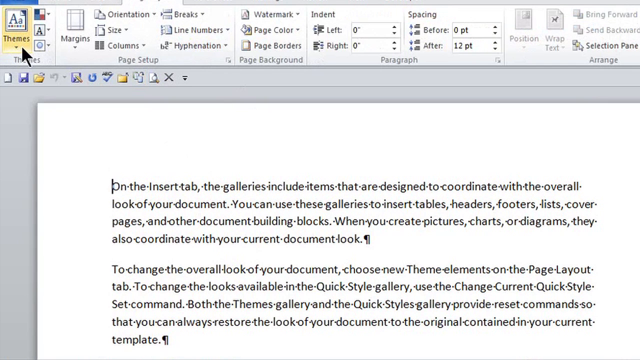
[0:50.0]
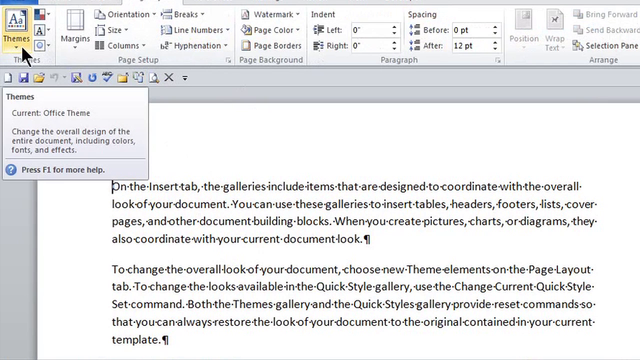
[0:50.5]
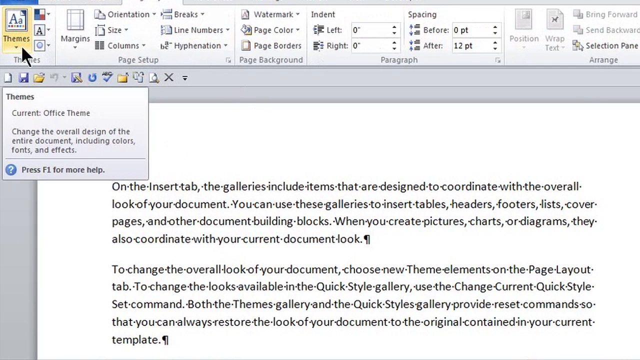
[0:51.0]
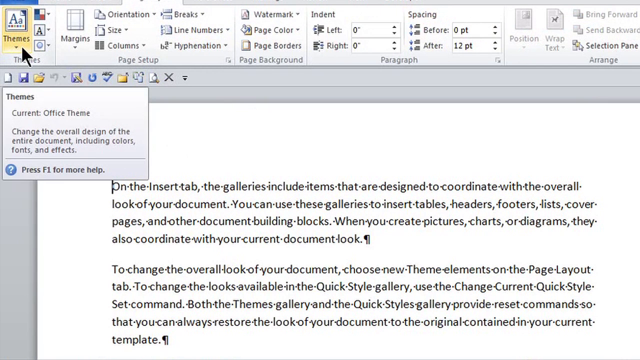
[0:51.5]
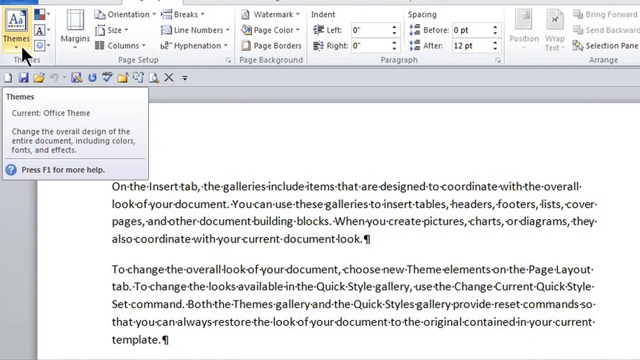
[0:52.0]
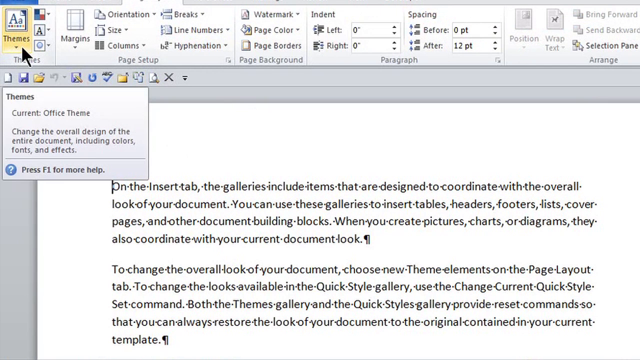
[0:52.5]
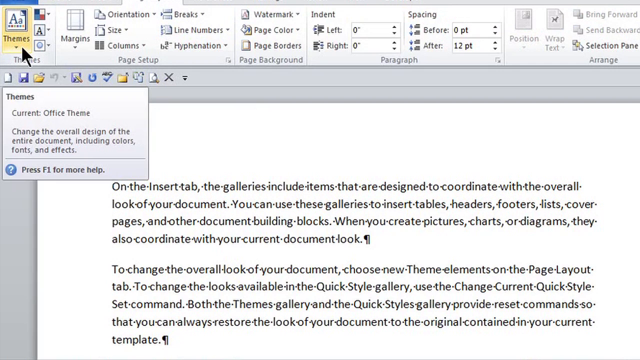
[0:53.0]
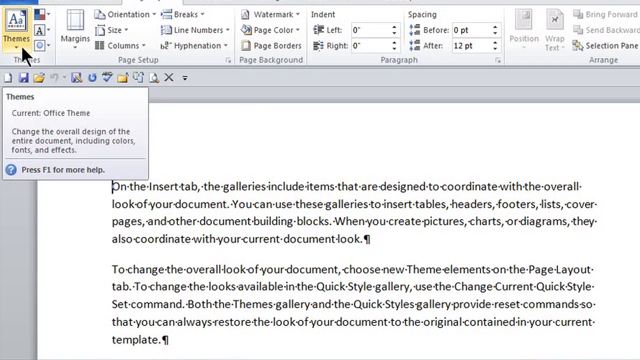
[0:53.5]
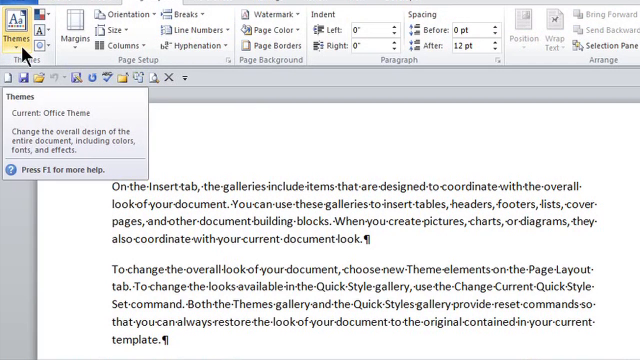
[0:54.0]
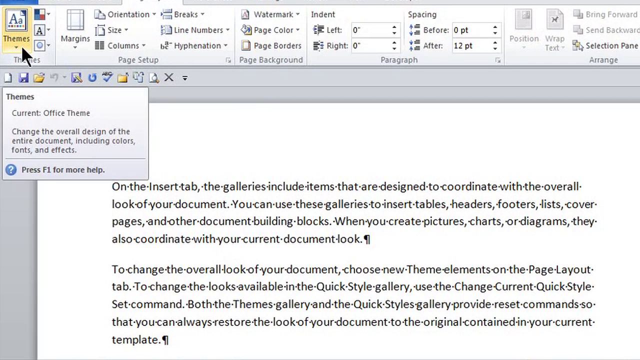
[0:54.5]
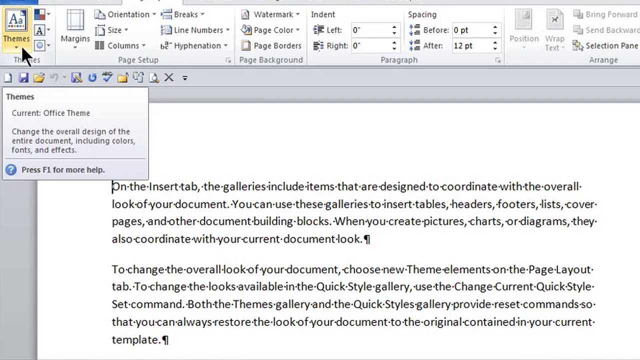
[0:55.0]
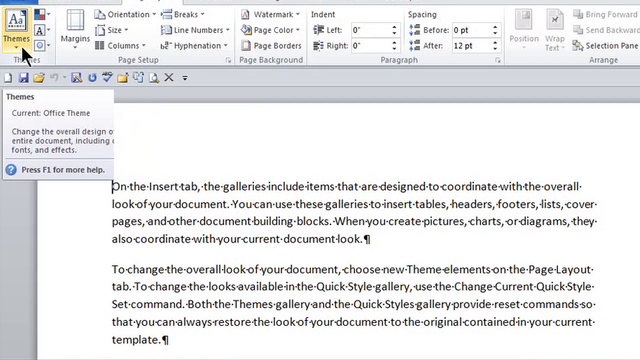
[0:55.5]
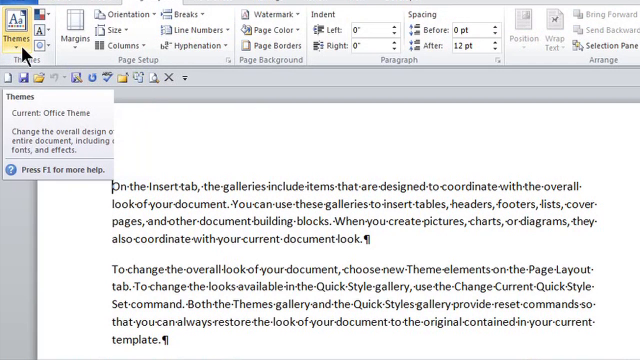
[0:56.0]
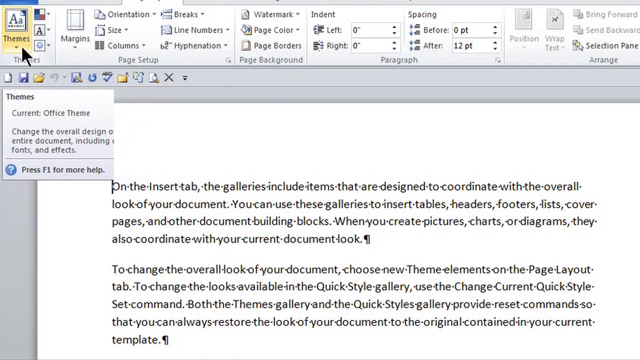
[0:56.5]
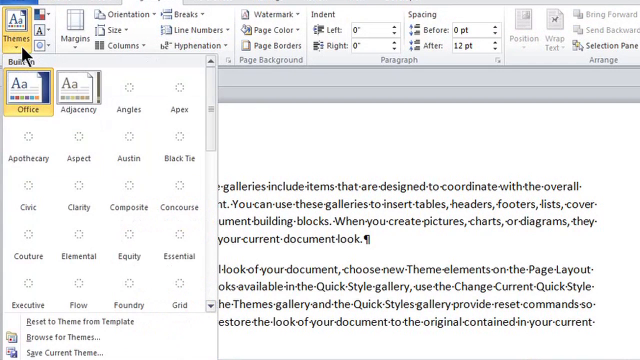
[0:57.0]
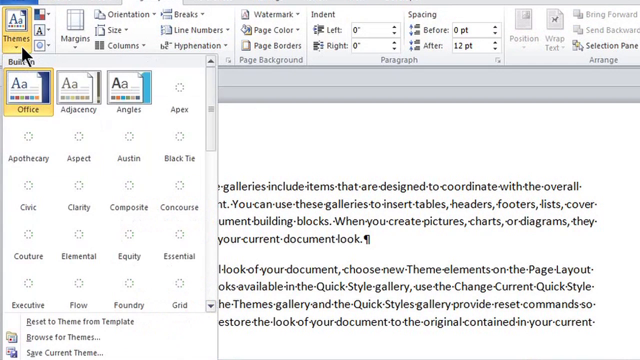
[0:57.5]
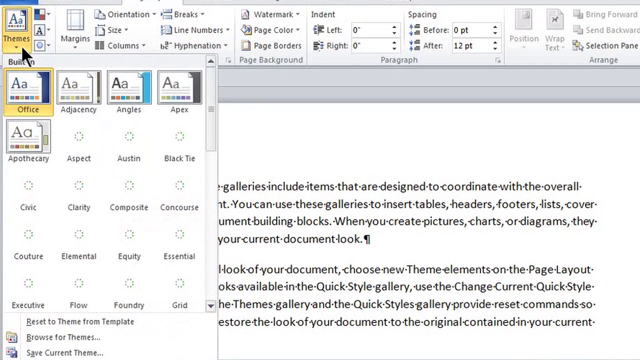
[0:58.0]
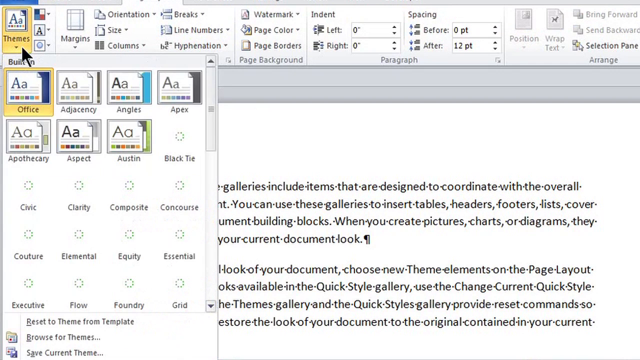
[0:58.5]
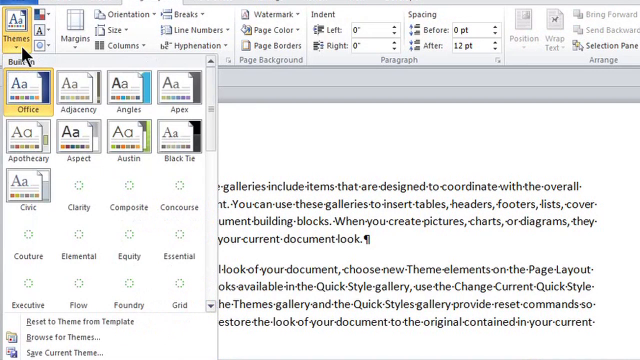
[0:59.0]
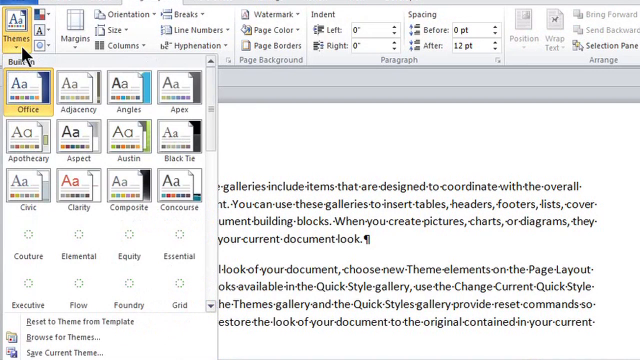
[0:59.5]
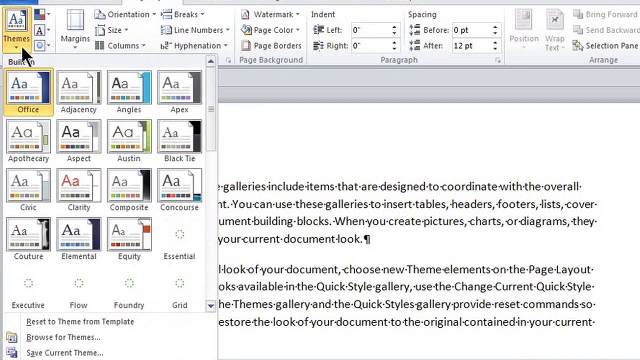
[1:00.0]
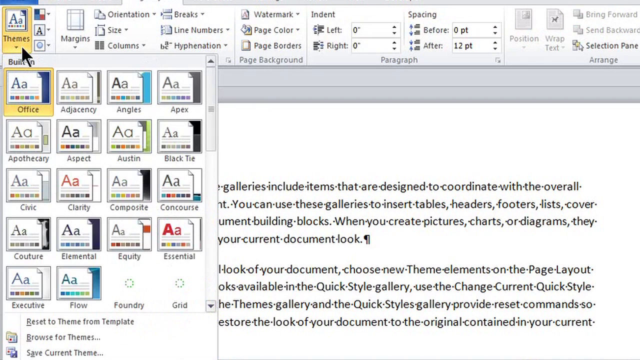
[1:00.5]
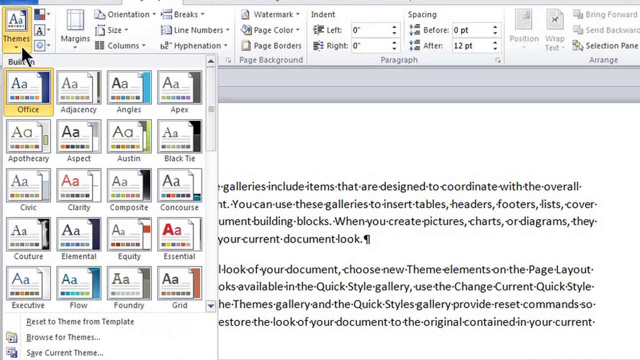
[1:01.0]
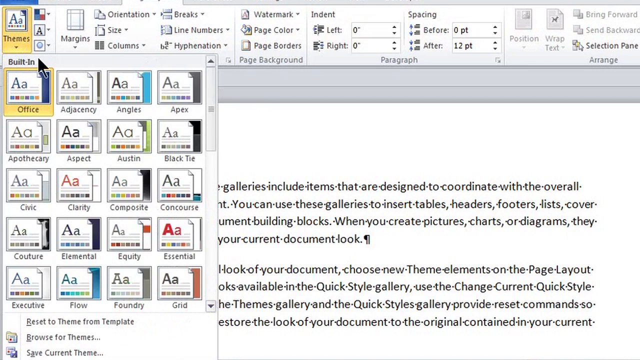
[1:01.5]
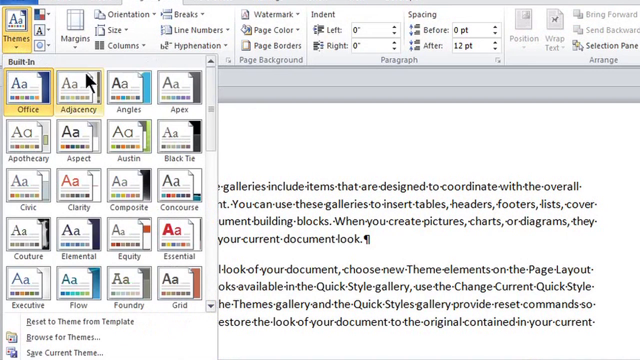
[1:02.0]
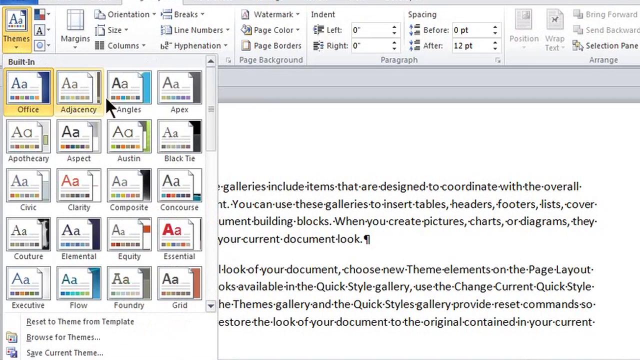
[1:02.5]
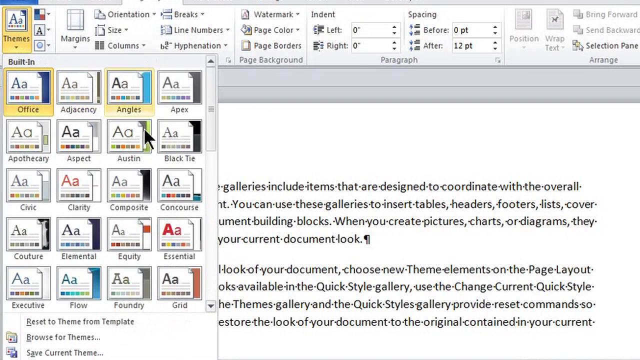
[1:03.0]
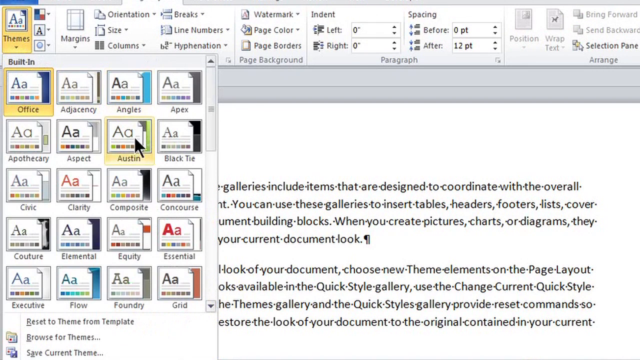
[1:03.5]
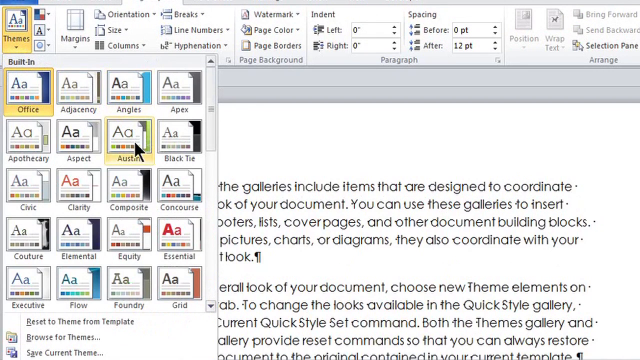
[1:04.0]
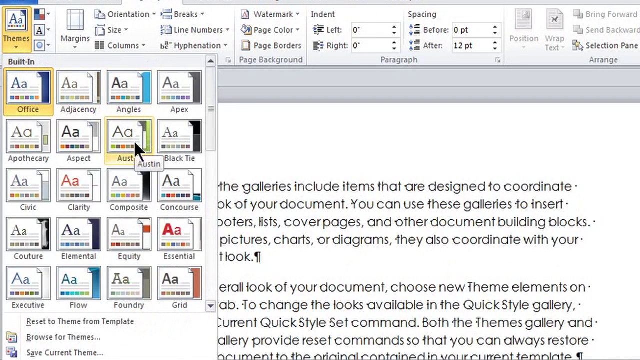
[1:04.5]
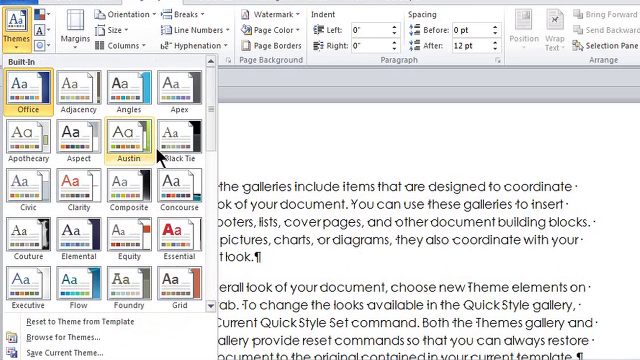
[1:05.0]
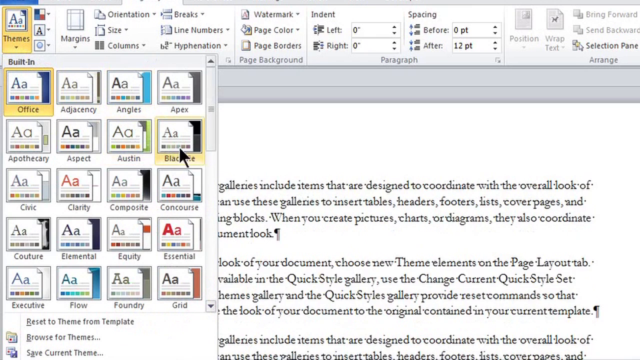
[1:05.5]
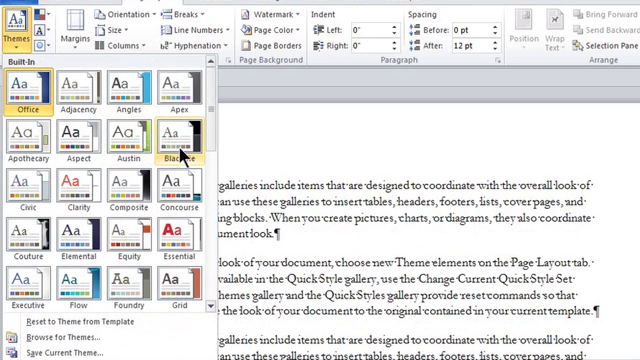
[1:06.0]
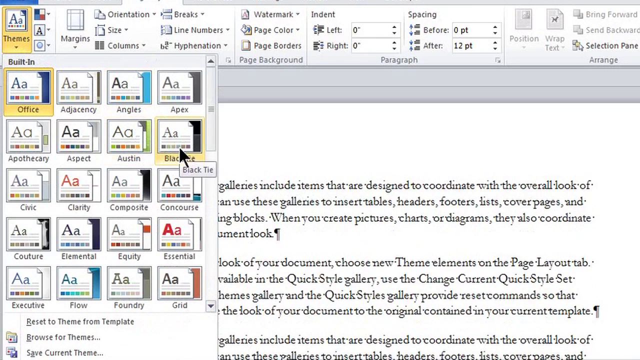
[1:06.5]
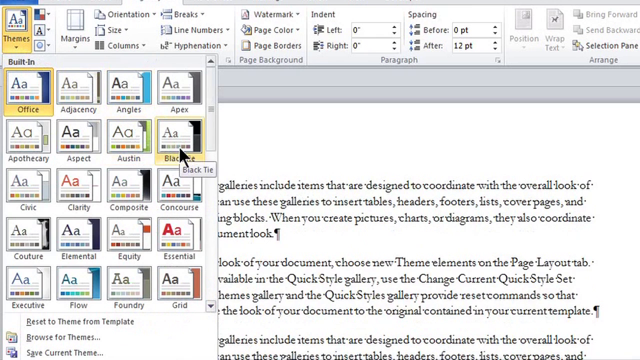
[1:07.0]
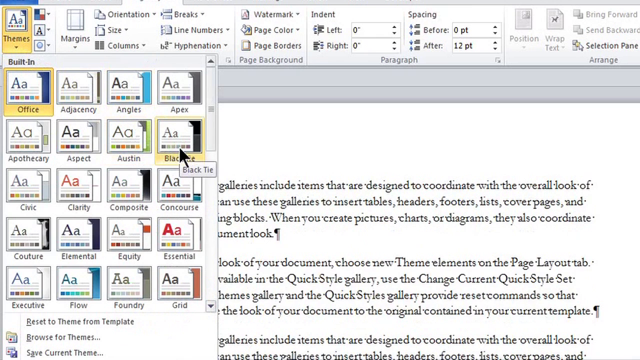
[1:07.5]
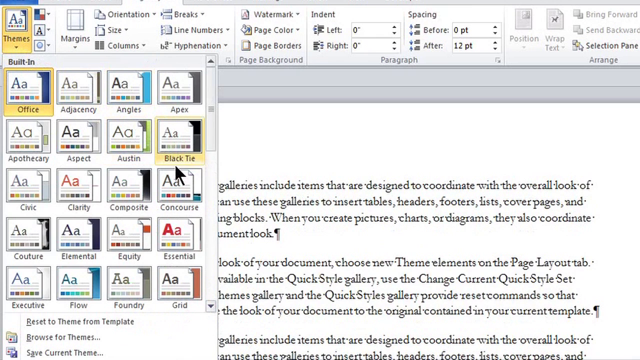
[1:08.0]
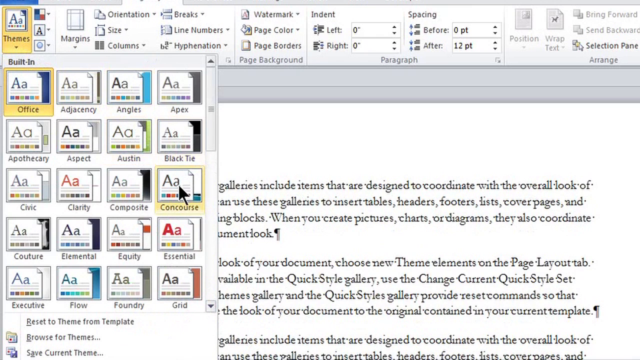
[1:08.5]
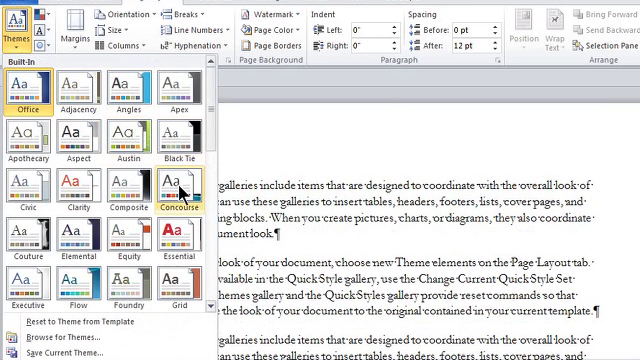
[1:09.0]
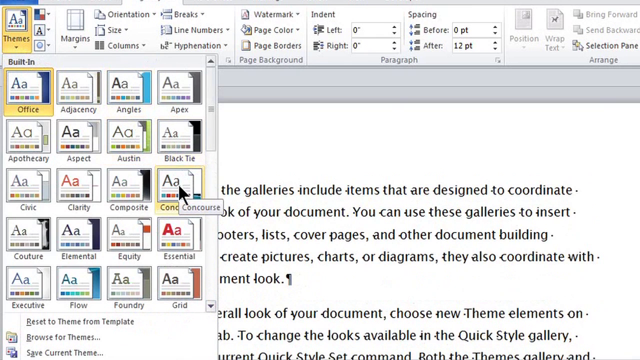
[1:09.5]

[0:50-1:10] The page reads: "to change the overall look of your document, choose new theme elements on the page layout. To change the looks available in the quick style gallery, use the change look quick style set command. Both the themes gallery and the quick style gallery provide reset command so that you can always restore the look of your document to the original."